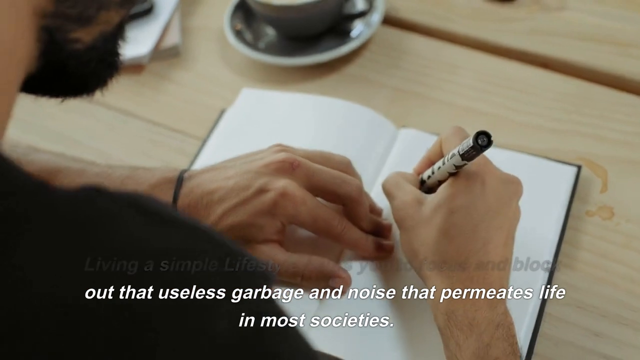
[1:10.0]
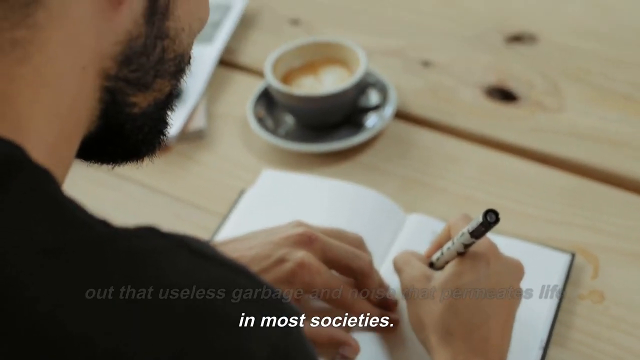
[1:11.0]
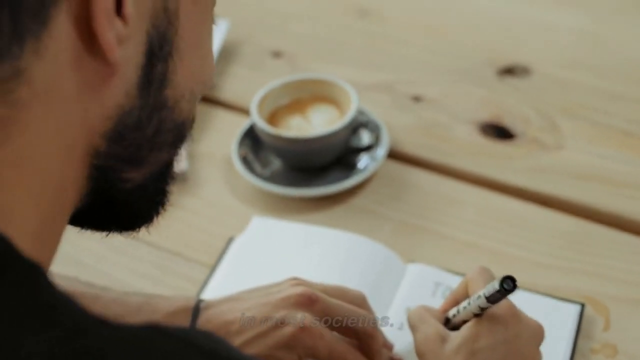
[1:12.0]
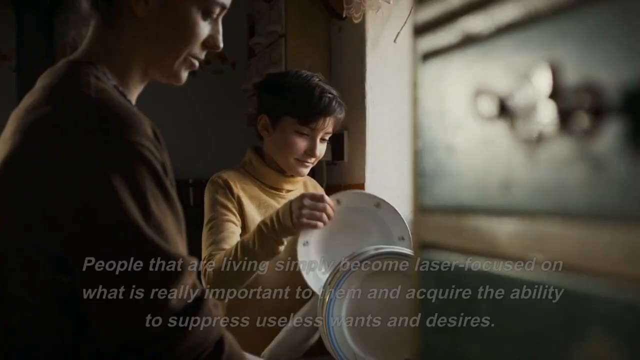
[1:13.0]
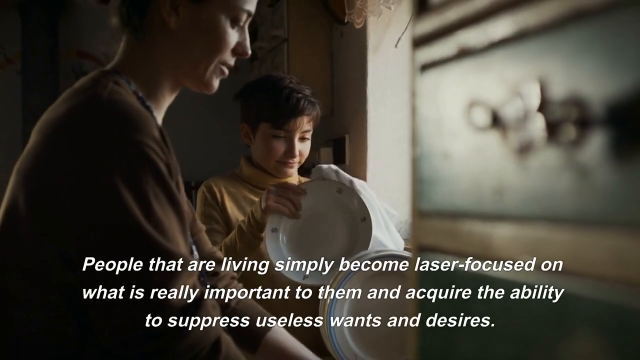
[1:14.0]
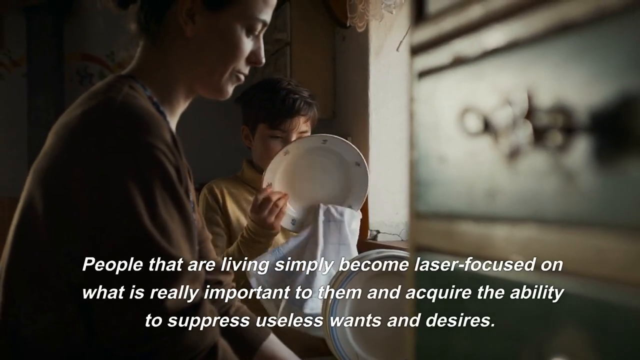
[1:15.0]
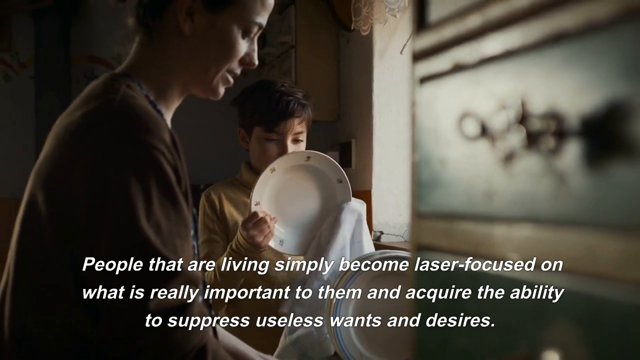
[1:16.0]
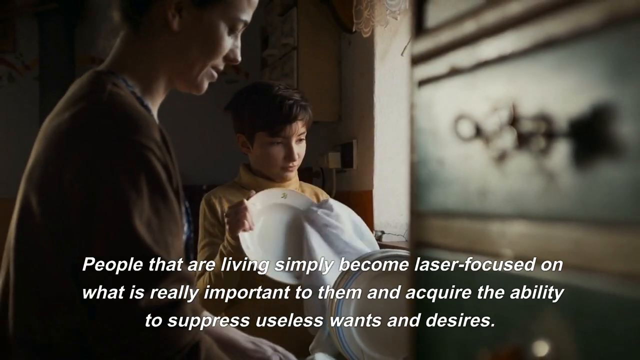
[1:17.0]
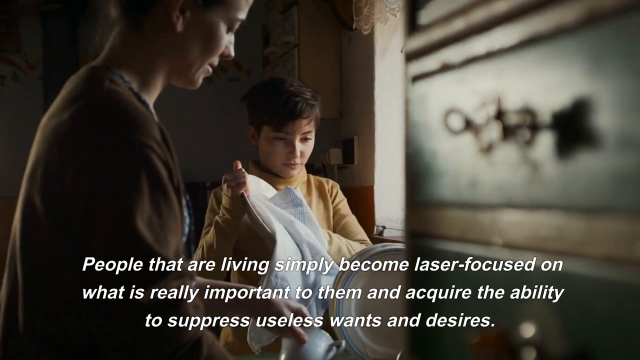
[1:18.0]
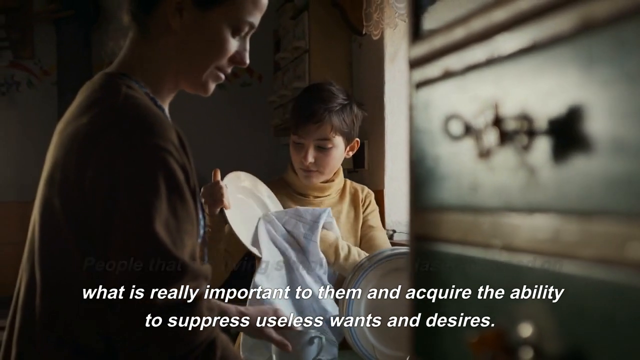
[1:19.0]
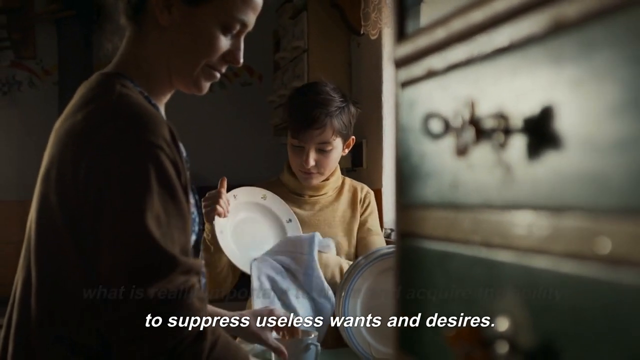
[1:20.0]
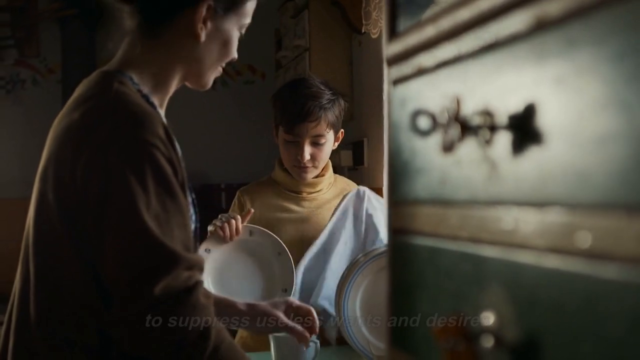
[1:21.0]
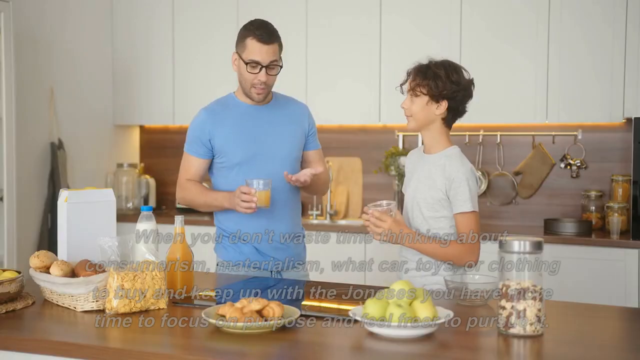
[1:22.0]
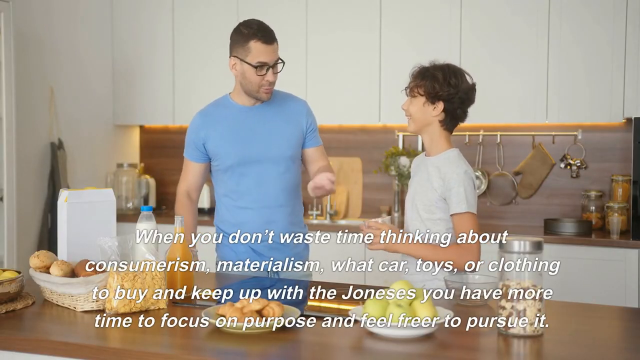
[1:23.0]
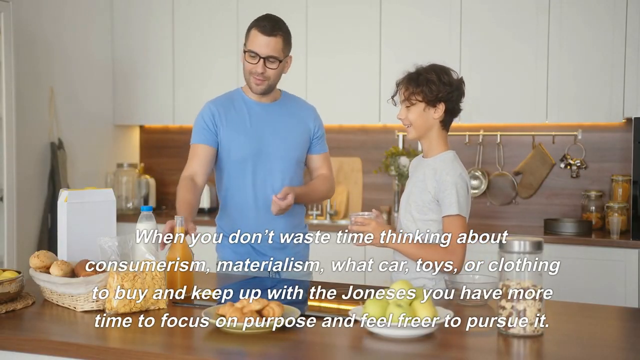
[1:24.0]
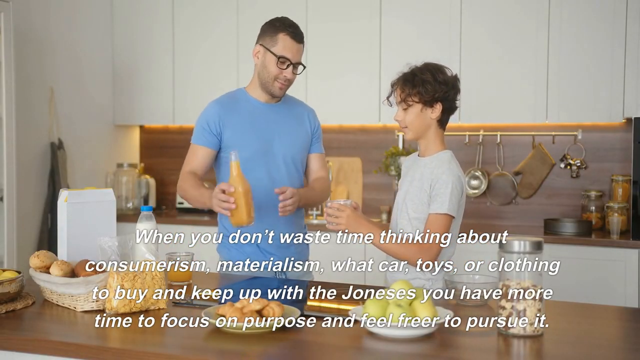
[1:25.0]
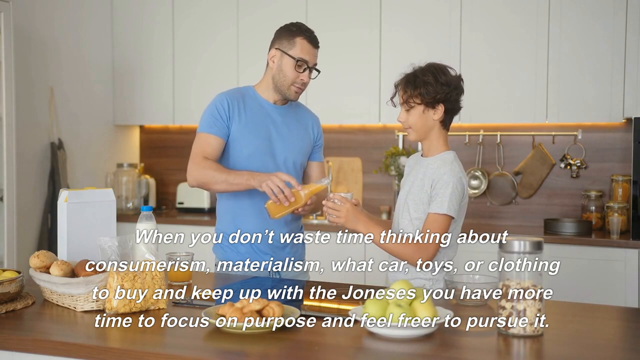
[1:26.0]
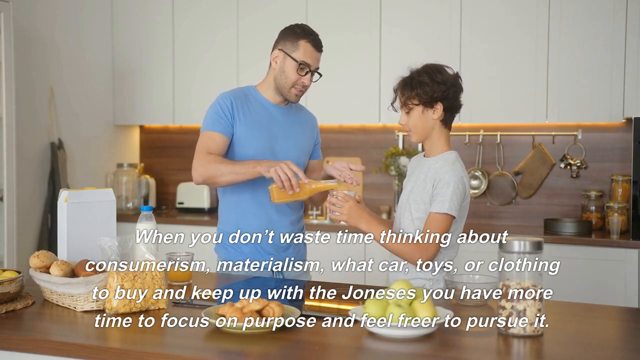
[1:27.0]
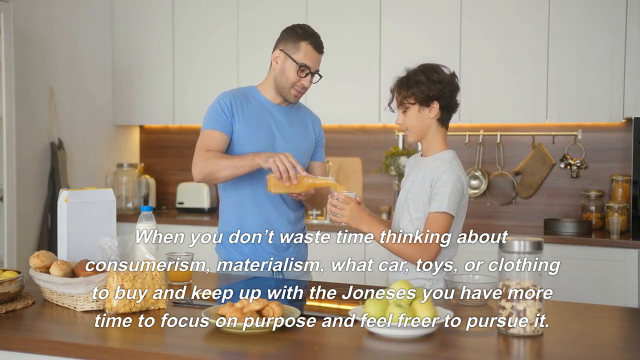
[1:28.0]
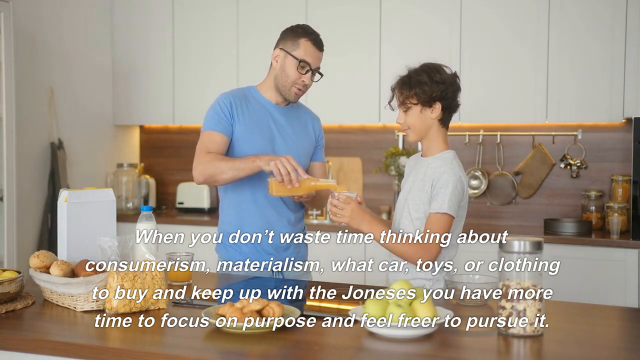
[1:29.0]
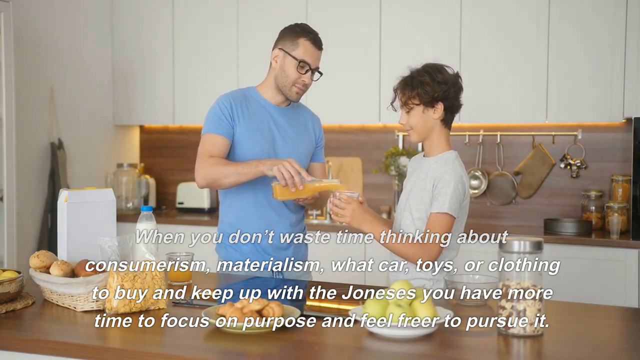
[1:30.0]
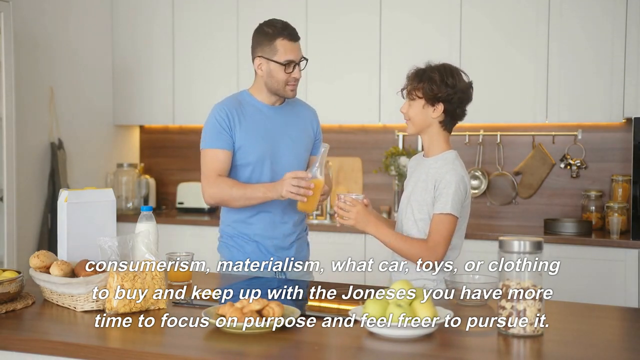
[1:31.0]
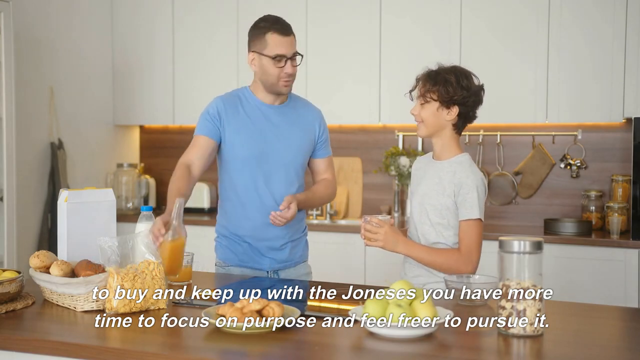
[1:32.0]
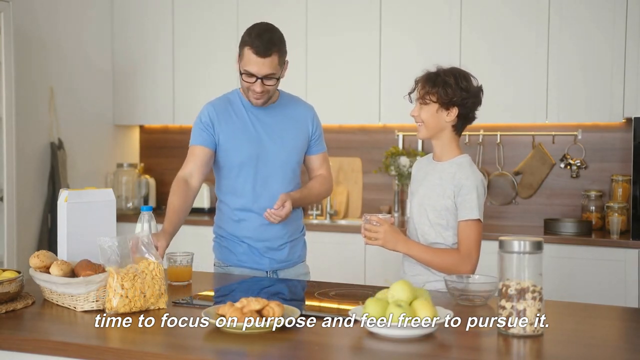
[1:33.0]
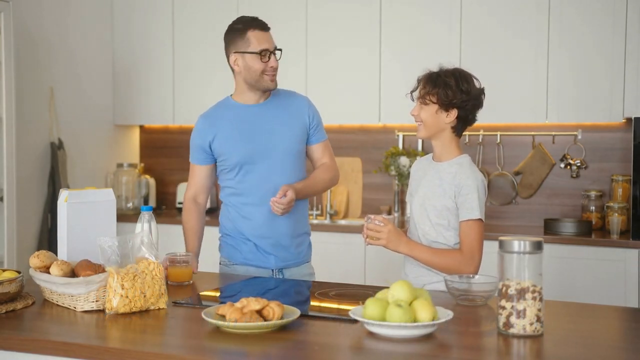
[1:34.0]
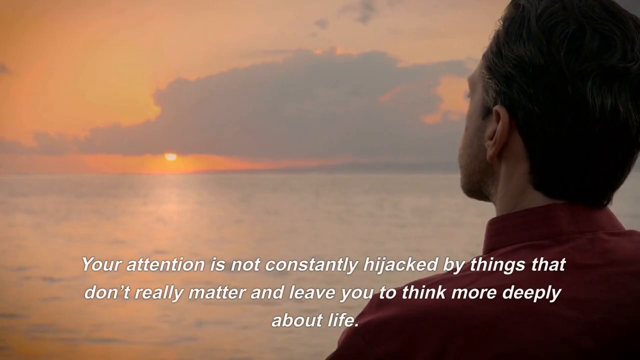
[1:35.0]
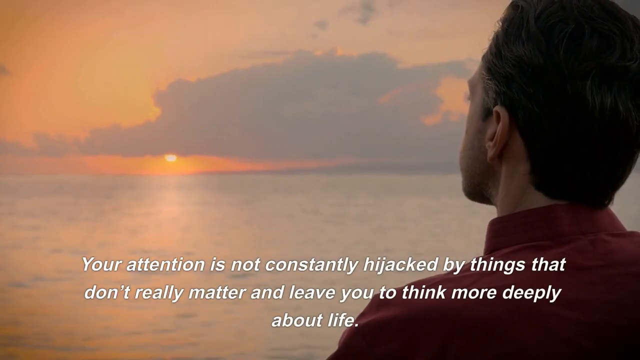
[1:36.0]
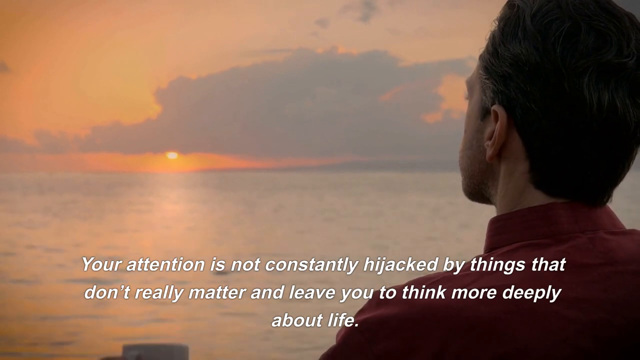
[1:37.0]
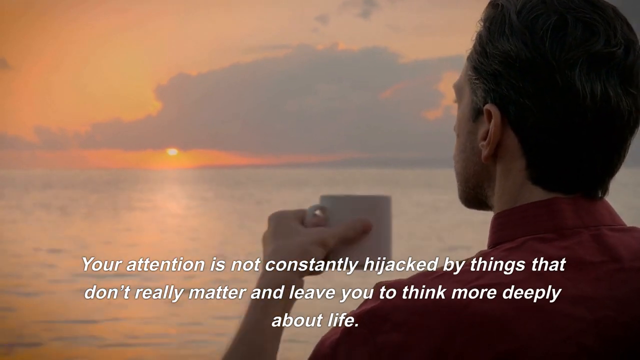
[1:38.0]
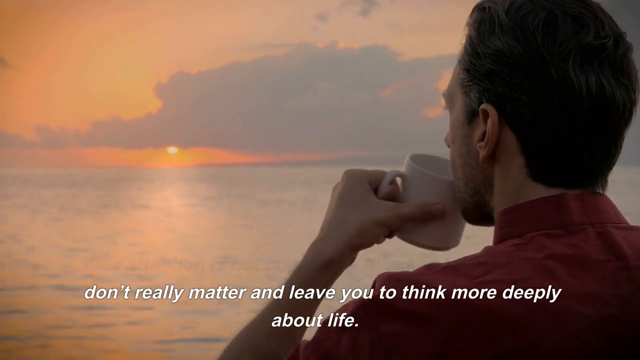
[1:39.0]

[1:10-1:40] The man continues writing in his notebook. A woman and another female, possibly her daughter, do the washing up together in a washing-up bowl and then stack plates to dry. The text reads: "people that are living simply become laser focused on what is really important to them, and acquire the ability to suppress useless wants and desires." The pair continue to dry plates. The father seen earlier is in the kitchen with his 11- or 12-year-old son, and the text reads: "when you don't waste time thinking about consumerism, materialism, what car, toys, or clothing to buy, and keep up with the Joneses, you have more time to focus on purpose, and feeling freer to pursue." The father pours his son an orange juice; both look happy. Finally, the view is over the shoulder of a middle-aged man looking out to sea at what appears to be a setting sun while drinking from a mug of coffee. The caption reads: "your attention is not constantly hijacked by things that don't really matter, and leave you to think more deeply about life."